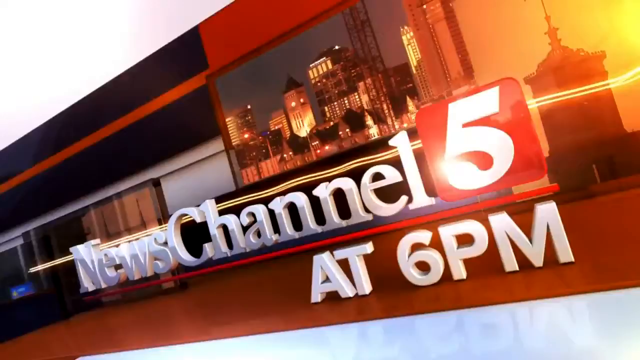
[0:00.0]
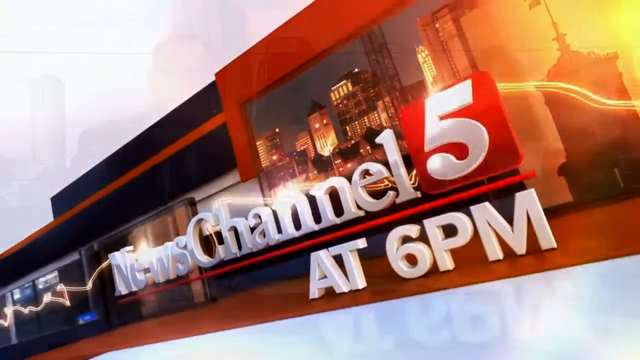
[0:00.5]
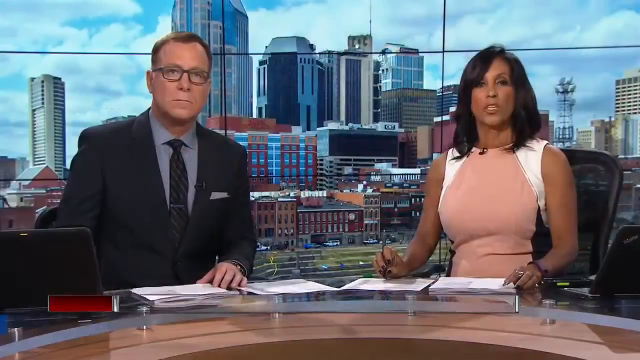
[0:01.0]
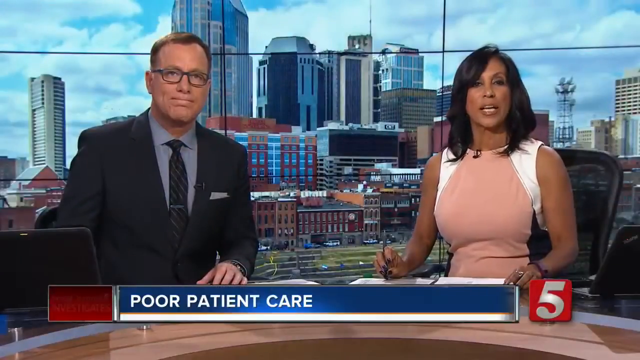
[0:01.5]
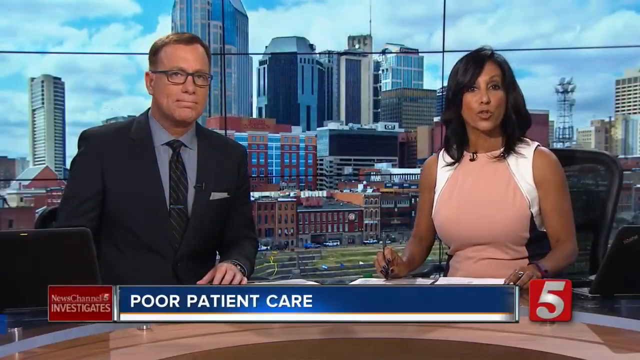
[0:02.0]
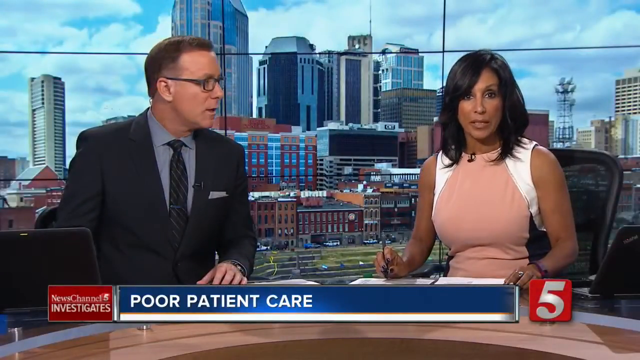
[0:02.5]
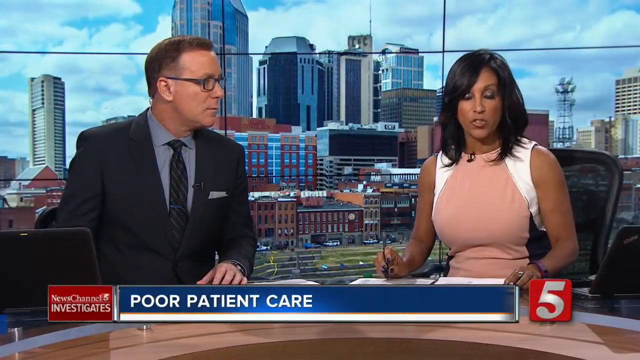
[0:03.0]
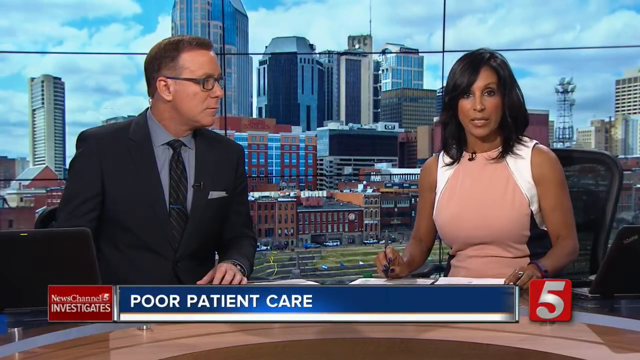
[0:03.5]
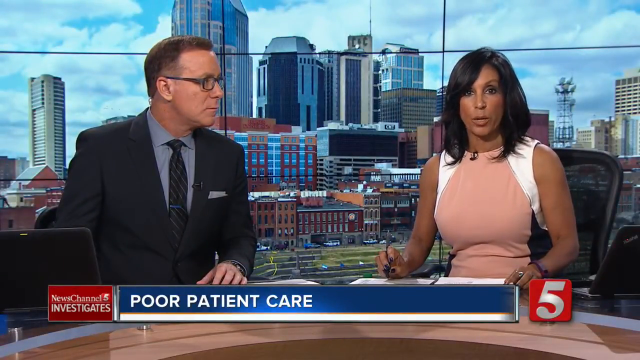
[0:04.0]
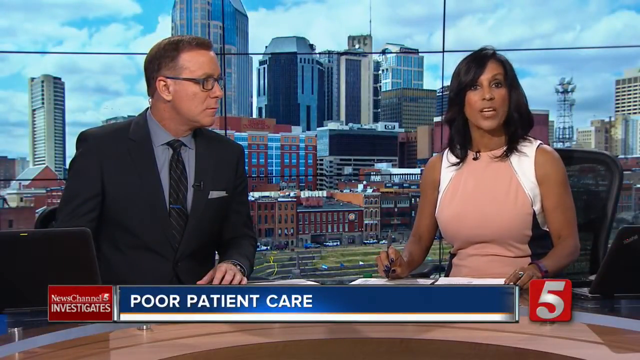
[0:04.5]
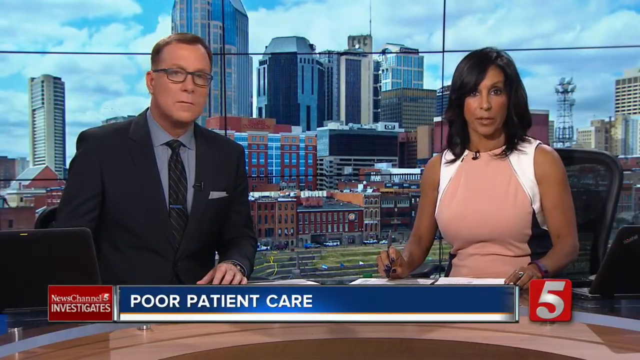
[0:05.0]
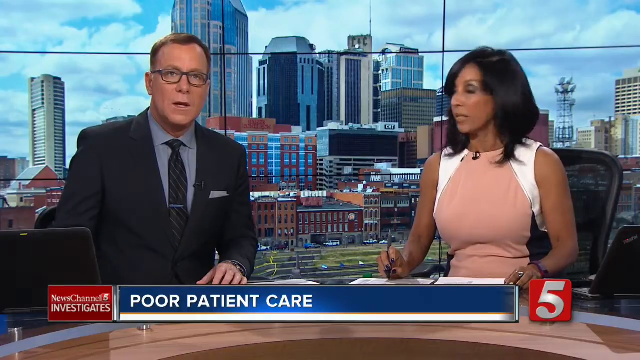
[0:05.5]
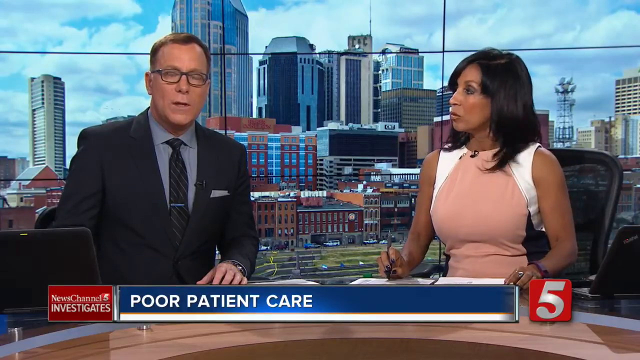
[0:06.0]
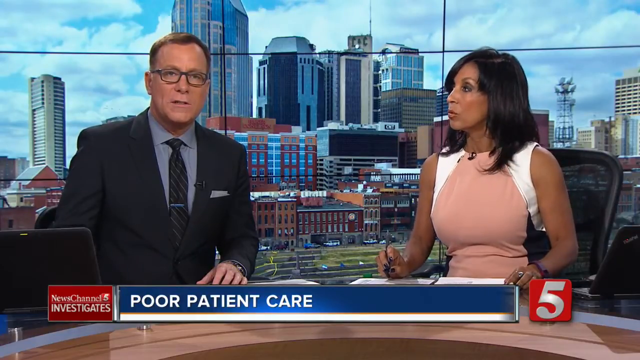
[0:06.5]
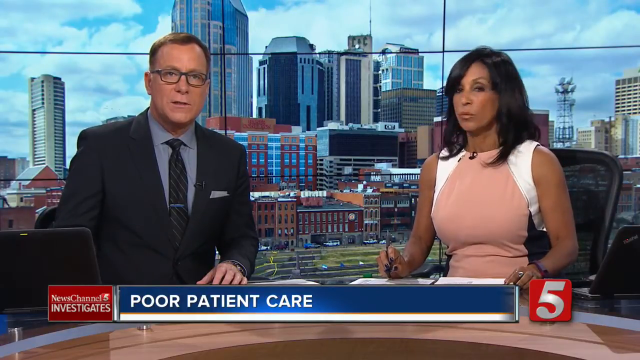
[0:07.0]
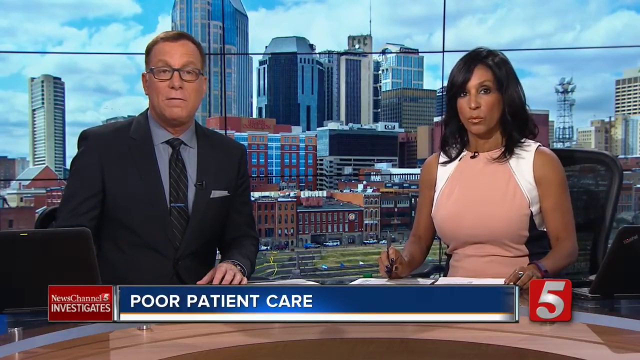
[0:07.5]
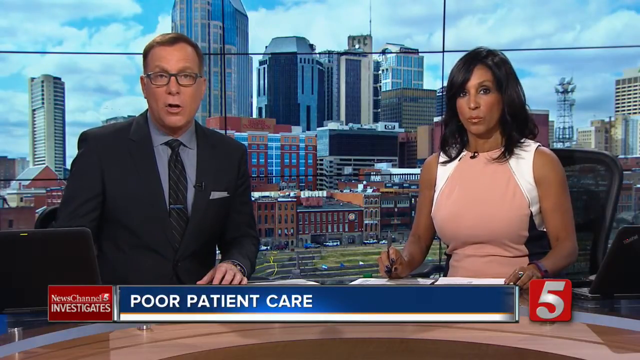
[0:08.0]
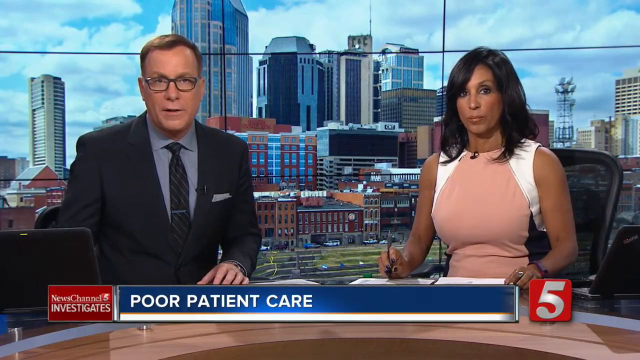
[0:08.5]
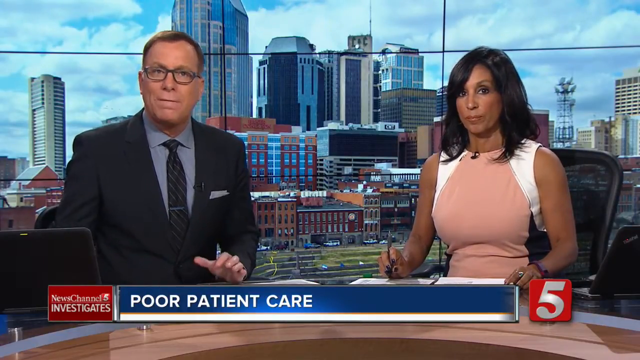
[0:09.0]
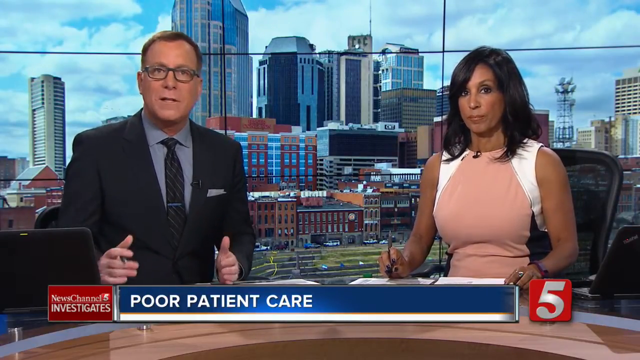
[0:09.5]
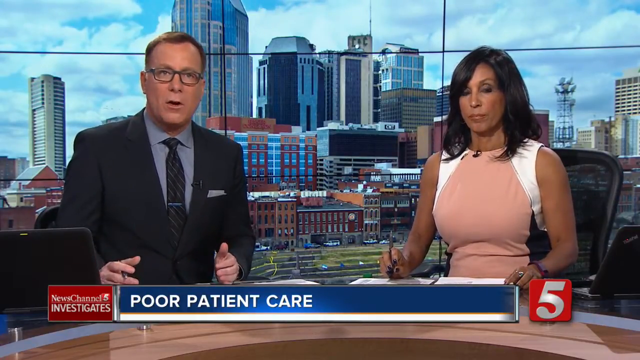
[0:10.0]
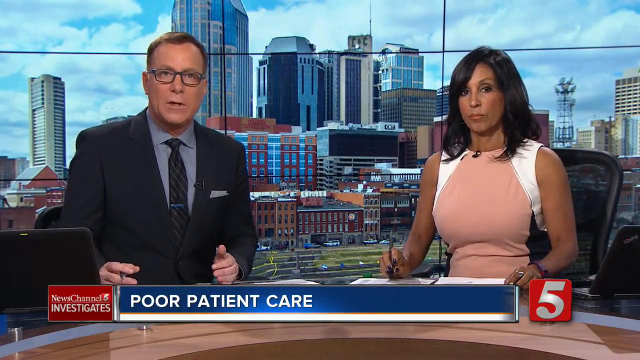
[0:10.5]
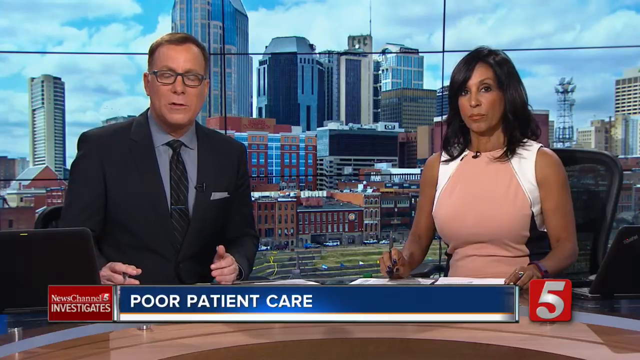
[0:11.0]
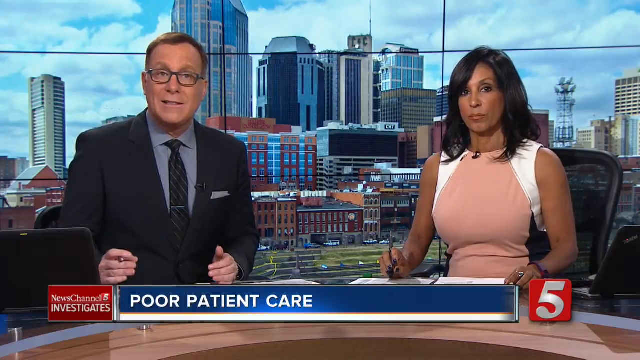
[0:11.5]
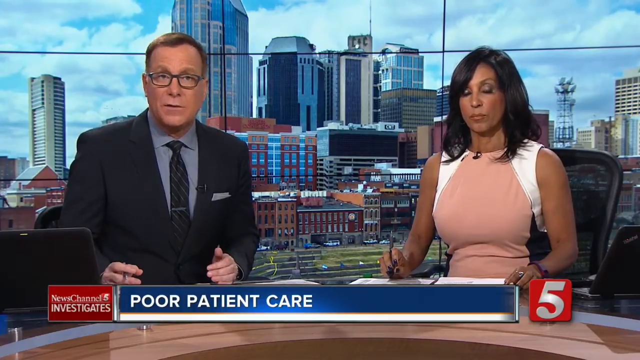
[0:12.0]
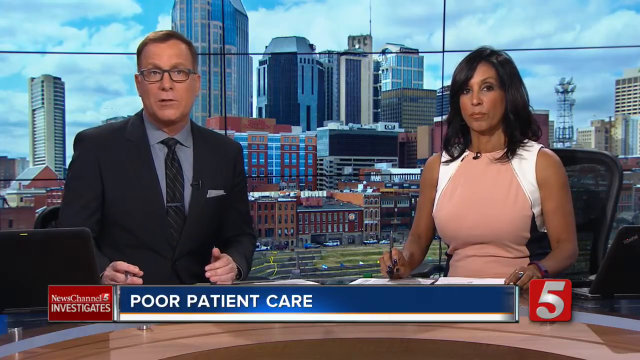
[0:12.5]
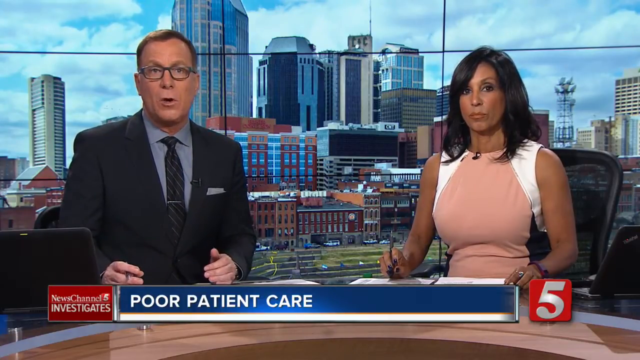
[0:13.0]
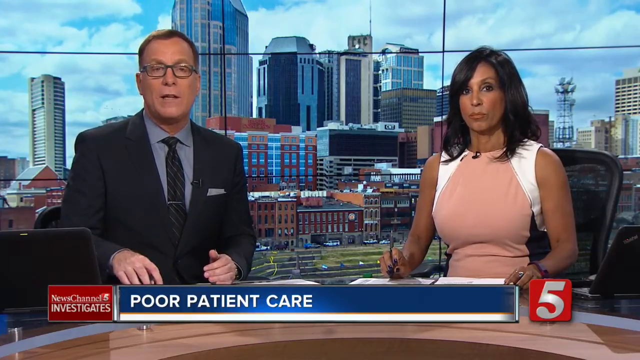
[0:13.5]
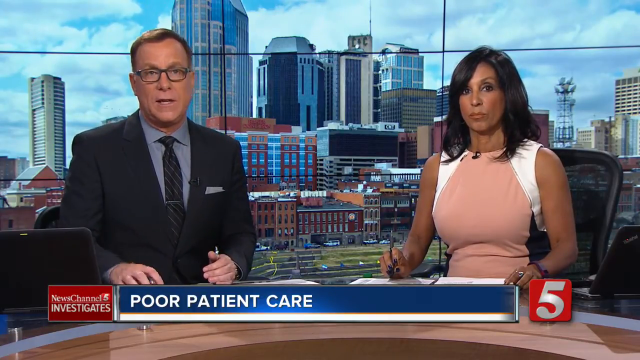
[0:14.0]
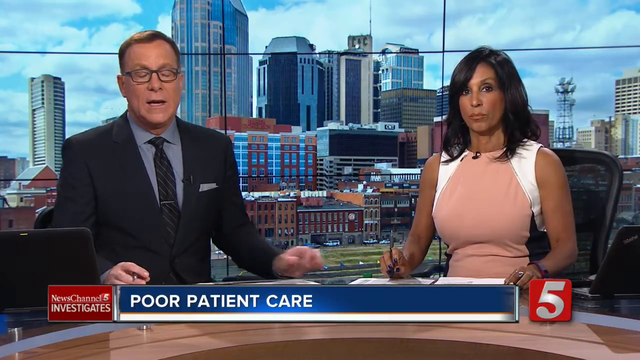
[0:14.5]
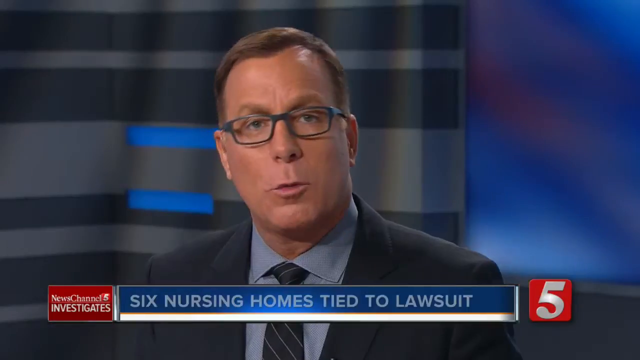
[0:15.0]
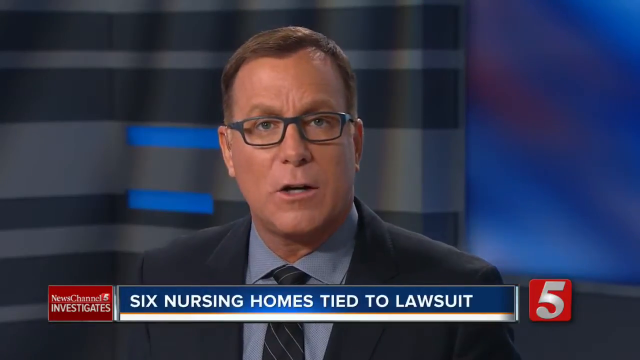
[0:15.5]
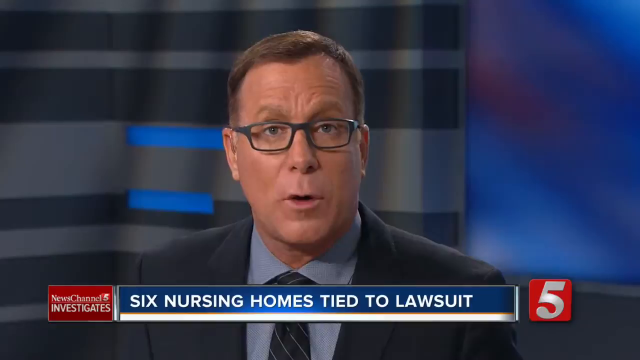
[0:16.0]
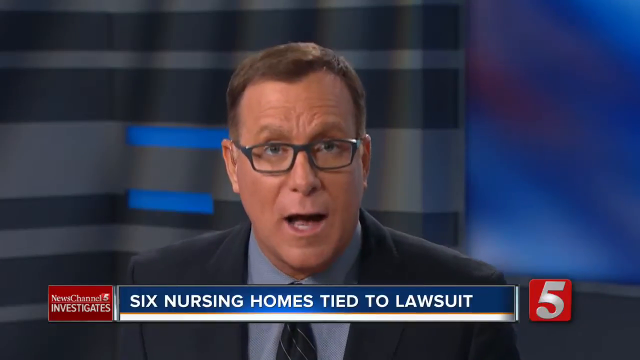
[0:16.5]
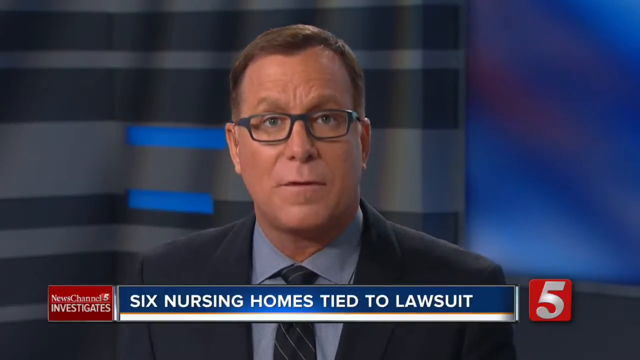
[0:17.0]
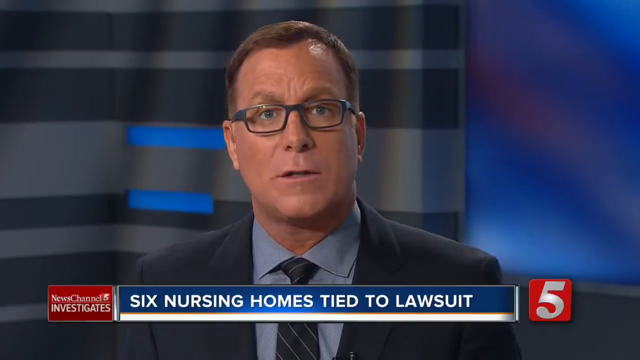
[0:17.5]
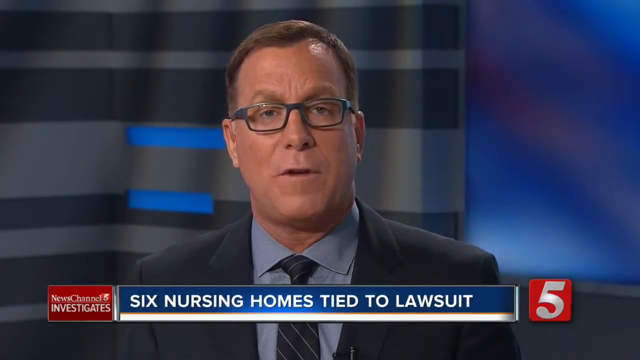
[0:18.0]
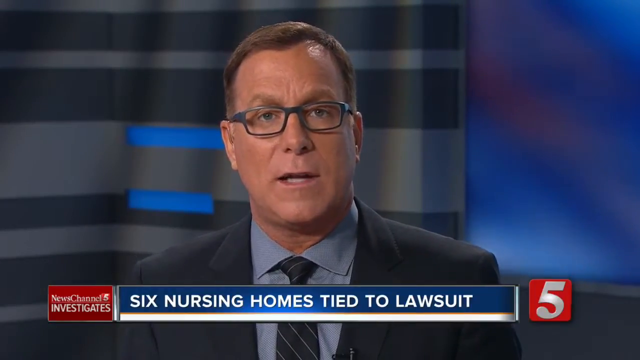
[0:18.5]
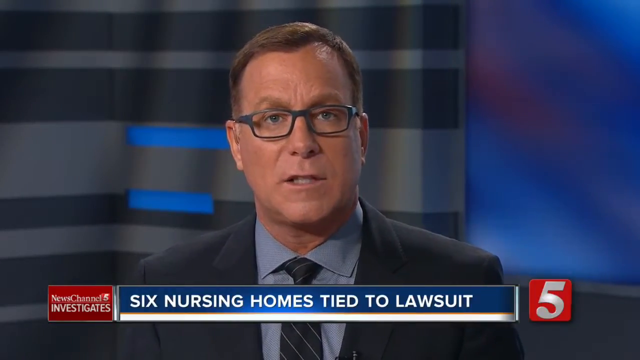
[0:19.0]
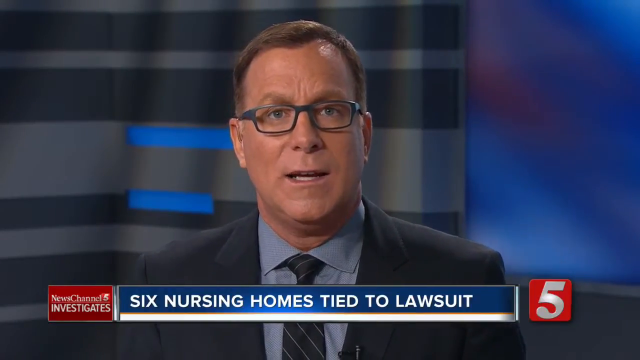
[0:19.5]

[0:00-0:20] The logo for News Channel 5 at 6 p.m. appears, along with two news anchors. The man wears a suit jacket, a buttoned-up shirt, a tie and glasses, and has what looks like a military-style haircut; he is very clean-shaven. His co-anchor is a woman in a pink and white blouse who apparently has long black hair down to her shoulders. The story being covered is poor patient care, and the caption then reads "six nursing homes tied to lawsuit."